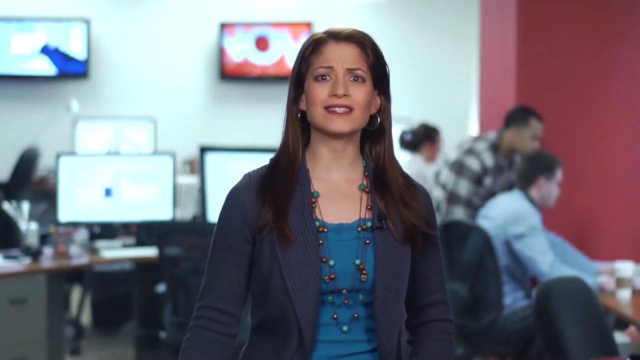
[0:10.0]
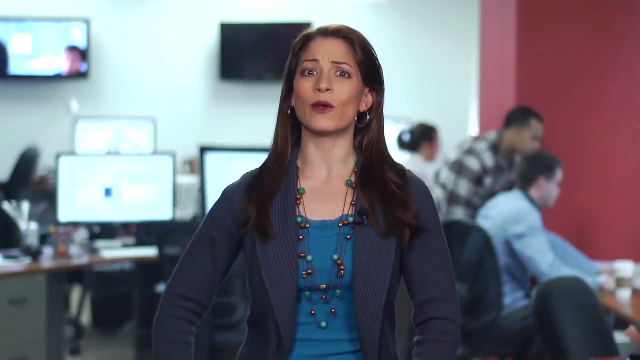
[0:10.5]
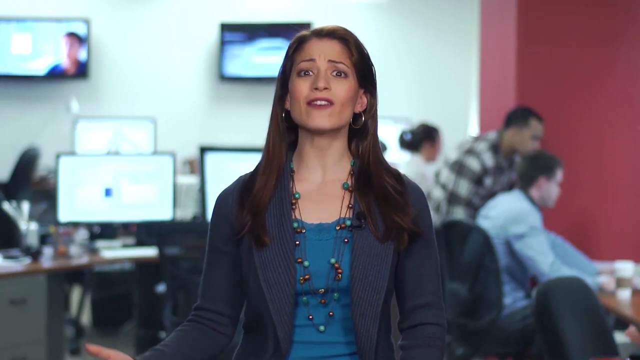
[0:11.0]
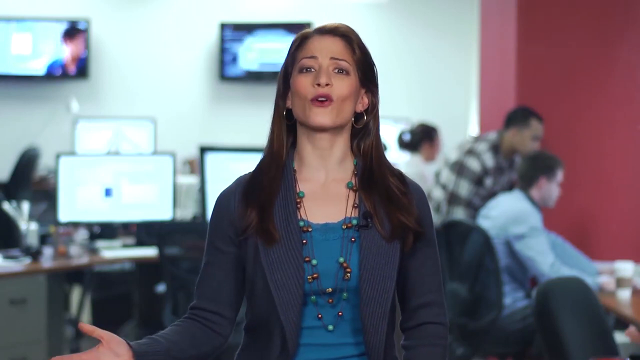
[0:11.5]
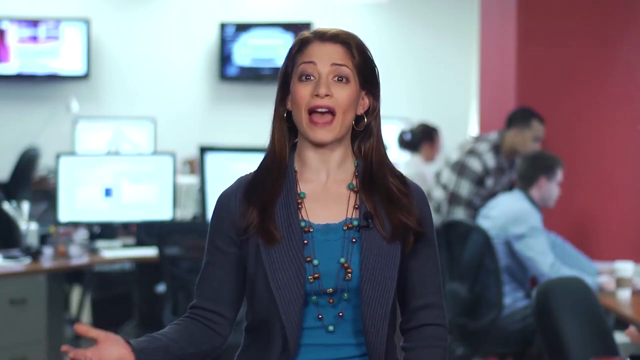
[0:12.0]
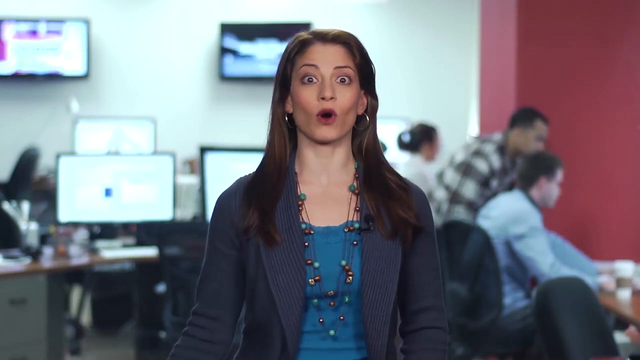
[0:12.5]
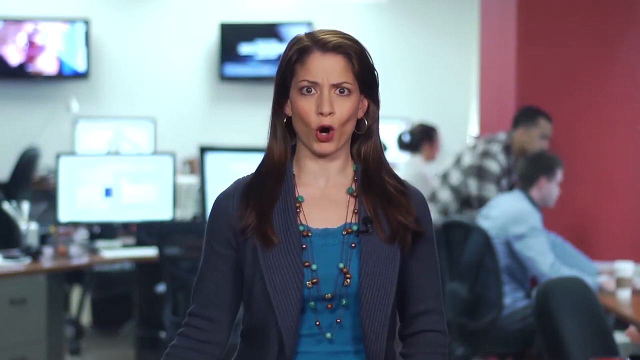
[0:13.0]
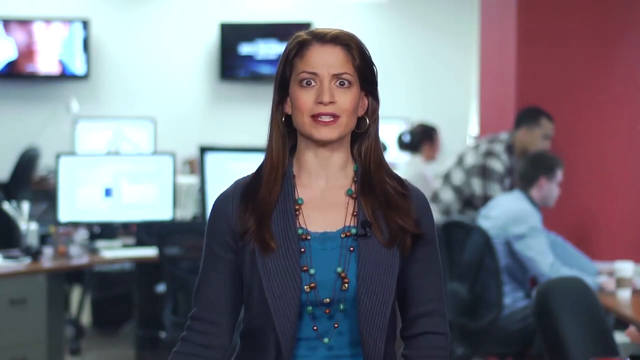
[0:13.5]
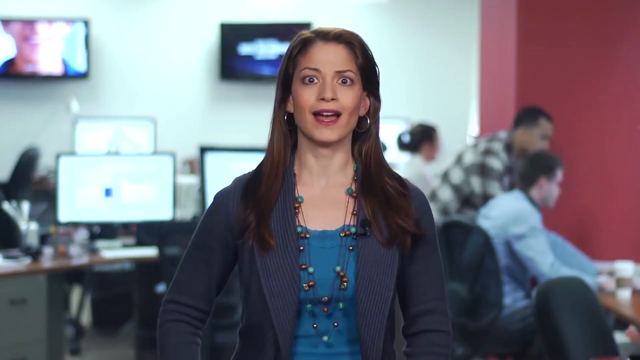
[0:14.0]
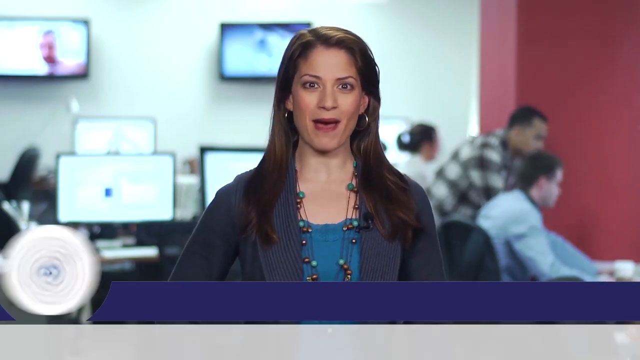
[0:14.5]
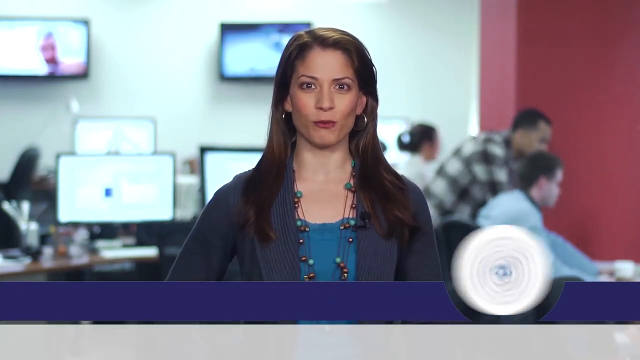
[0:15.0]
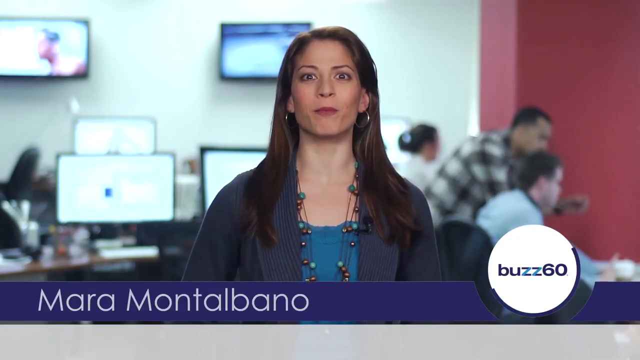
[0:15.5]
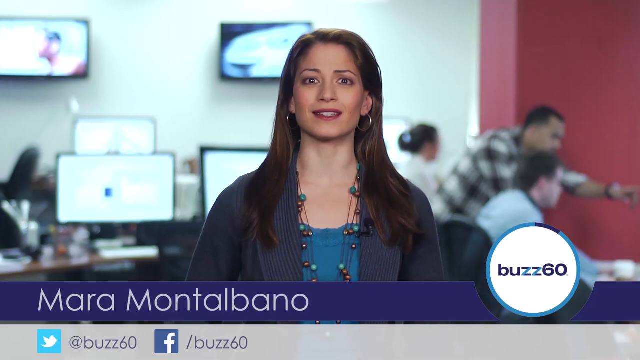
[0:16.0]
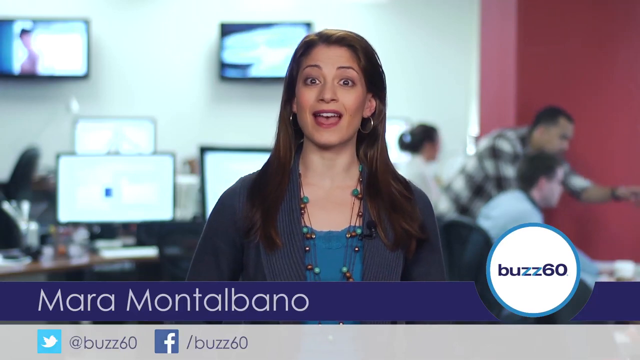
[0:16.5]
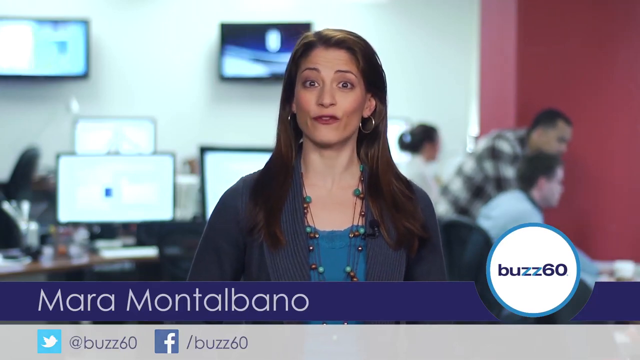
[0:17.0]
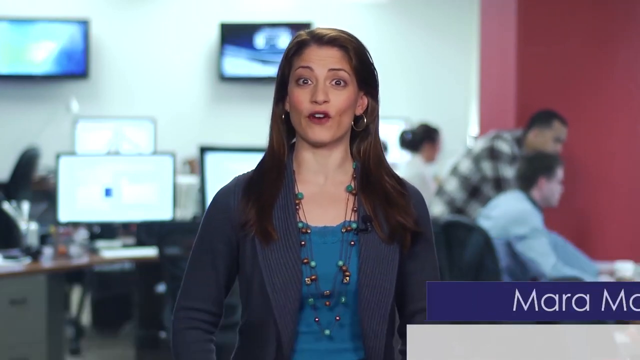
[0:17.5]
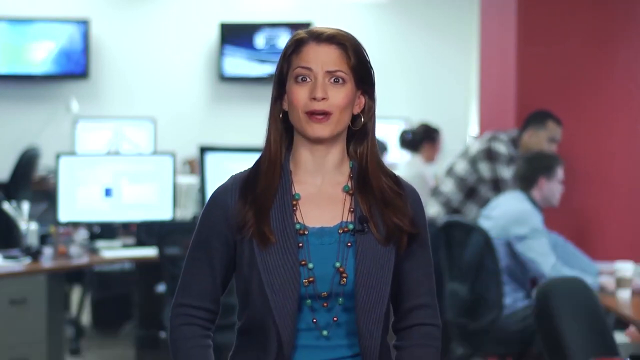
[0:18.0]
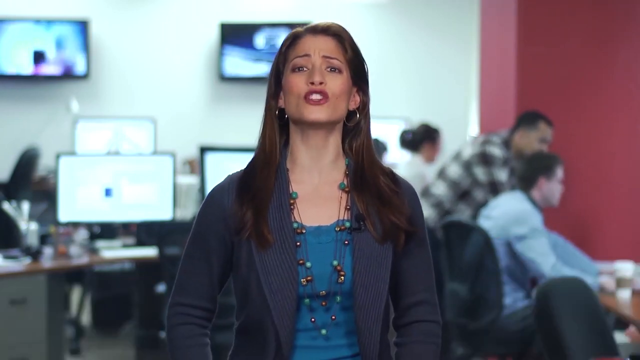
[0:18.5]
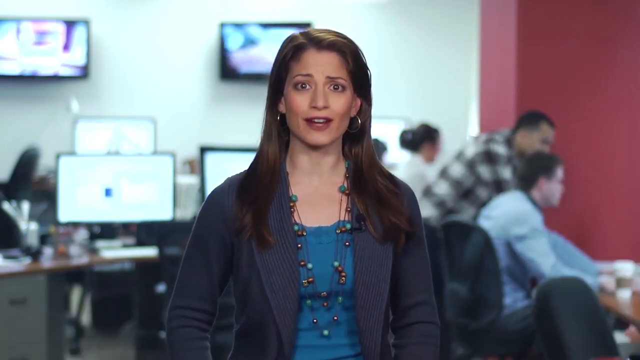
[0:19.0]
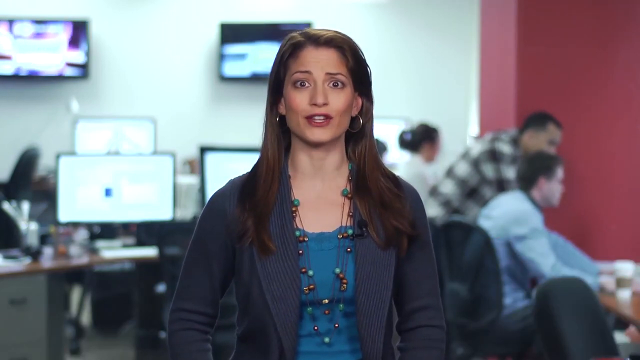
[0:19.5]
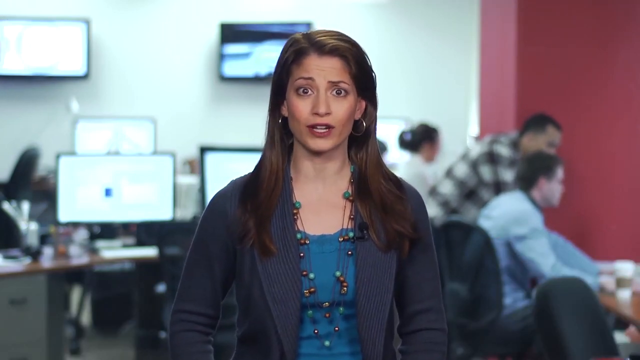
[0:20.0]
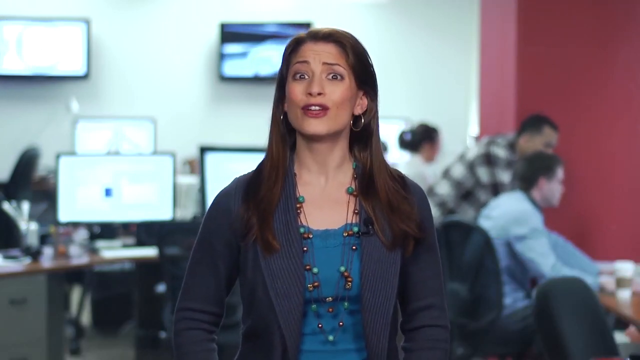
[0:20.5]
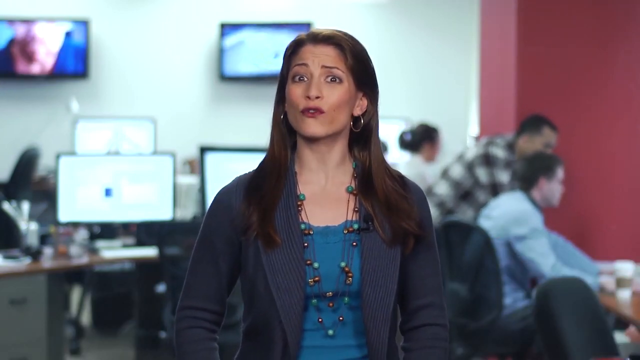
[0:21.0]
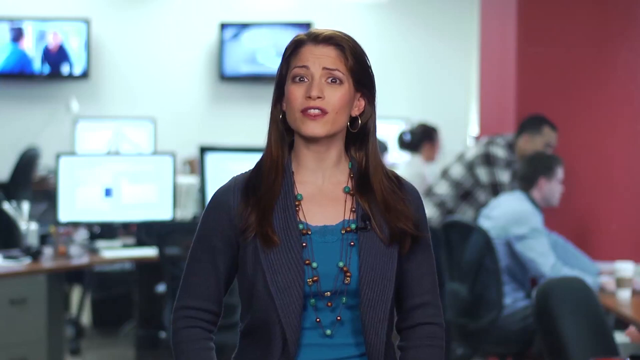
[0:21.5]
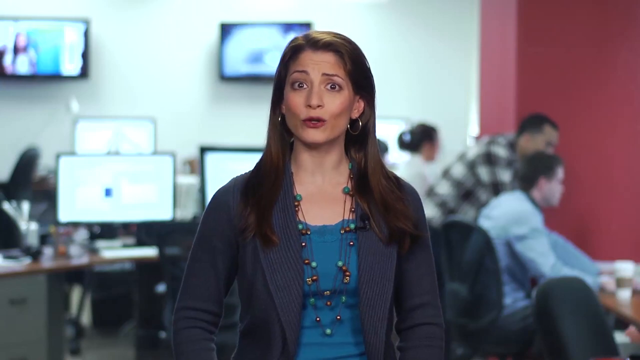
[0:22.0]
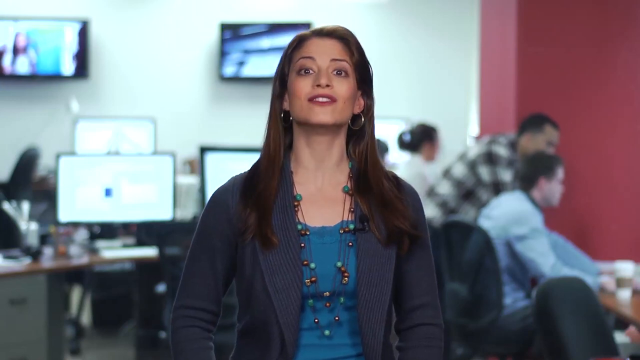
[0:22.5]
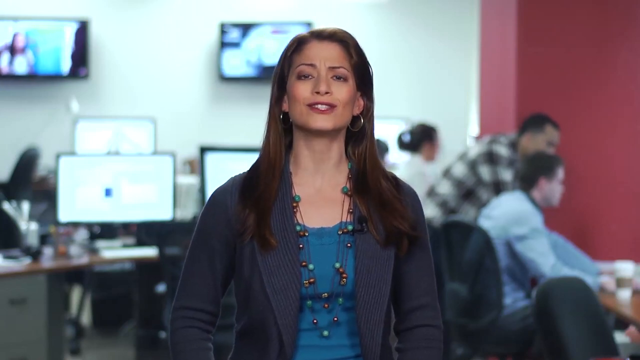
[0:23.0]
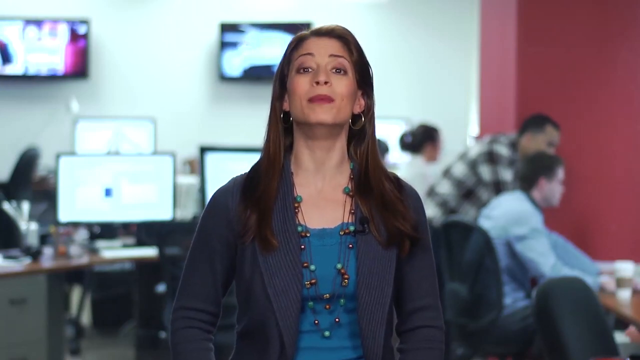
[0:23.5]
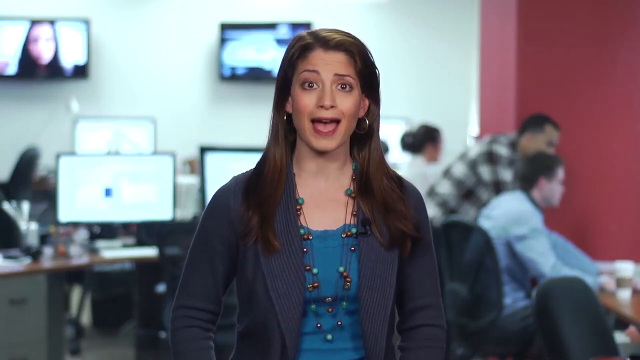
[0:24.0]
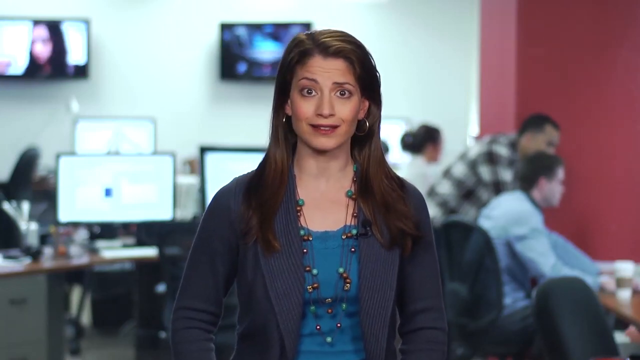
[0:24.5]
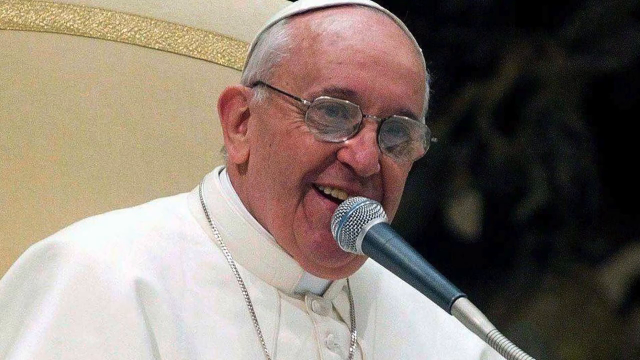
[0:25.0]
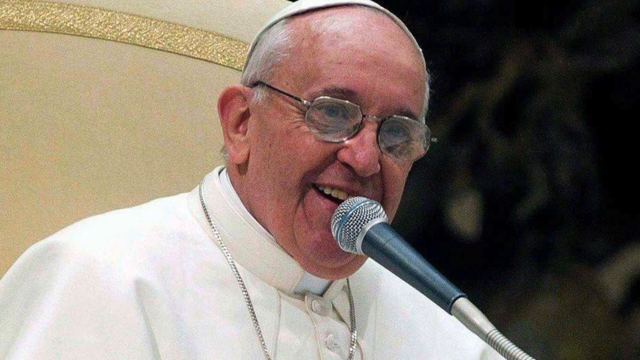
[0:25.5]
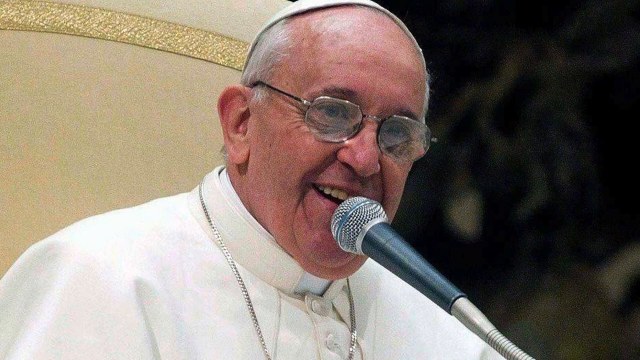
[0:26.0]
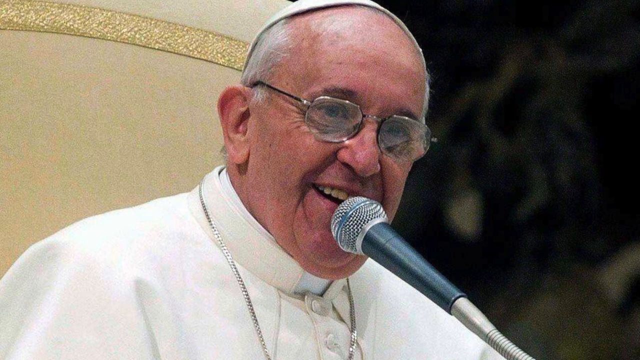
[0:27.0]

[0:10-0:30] A woman is inside a room, wearing a coat with a green dress underneath. Behind her are lit computer screens, and a group of people sits at a table. She has long, dark brown hair and wears earrings. A caption with her name, "Mara", appears at the bottom of the screen, and she is shown speaking in front of the camera. Next comes a picture of the Pope standing in front of a mic and speaking into it; he wears white gloves, a cross necklace and glasses.